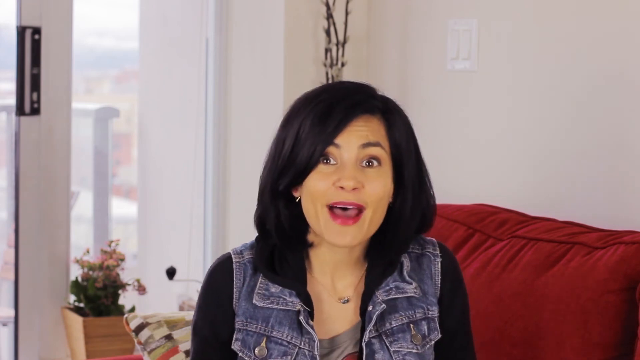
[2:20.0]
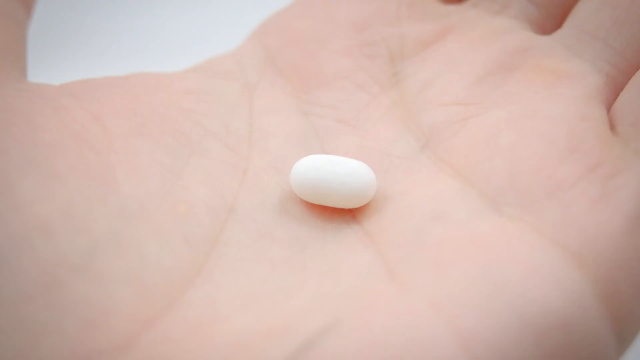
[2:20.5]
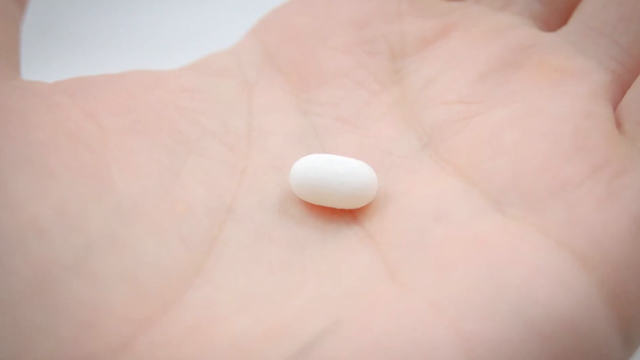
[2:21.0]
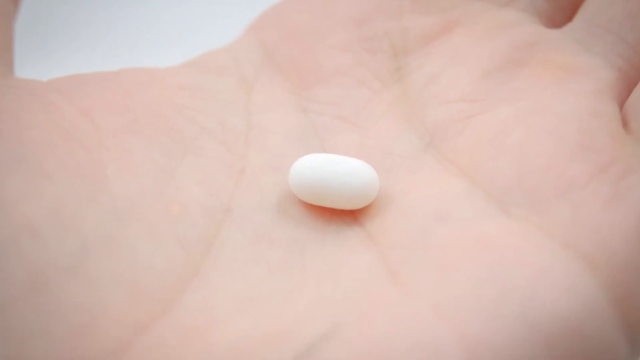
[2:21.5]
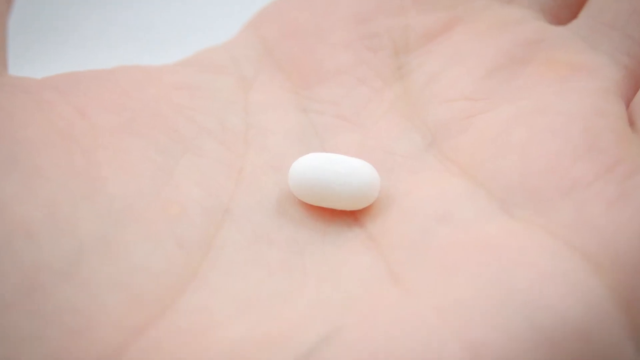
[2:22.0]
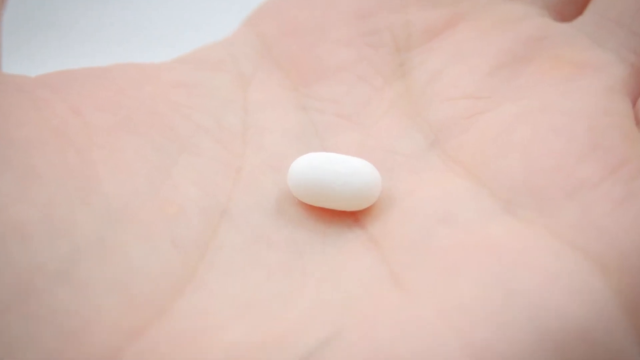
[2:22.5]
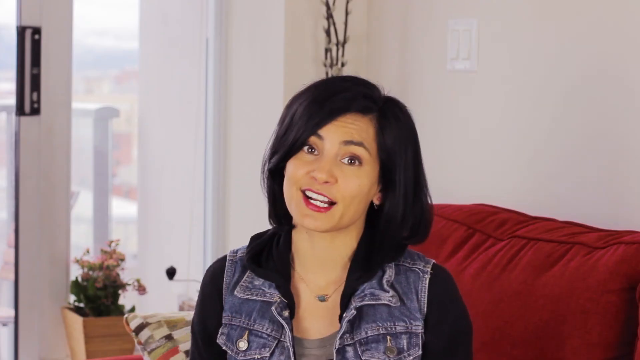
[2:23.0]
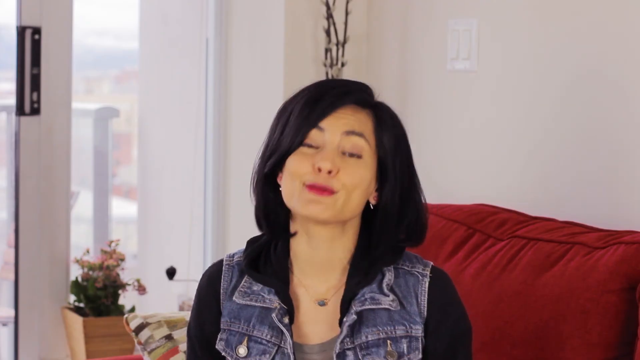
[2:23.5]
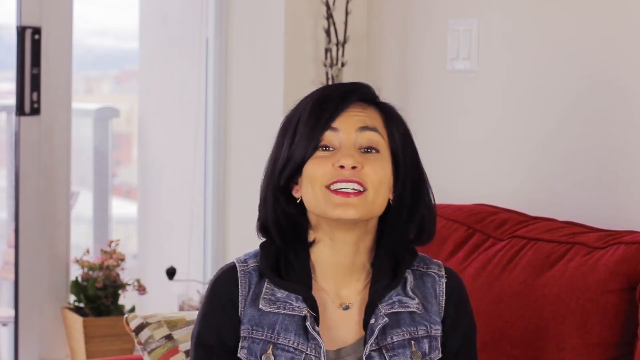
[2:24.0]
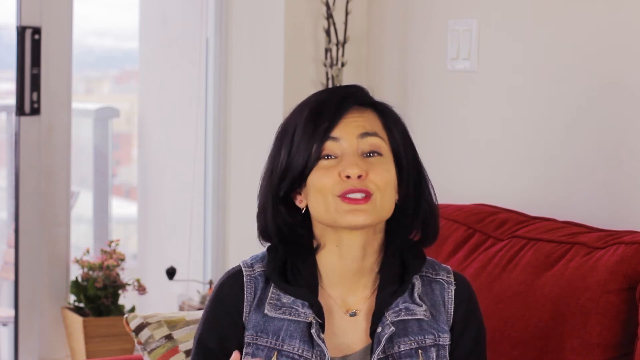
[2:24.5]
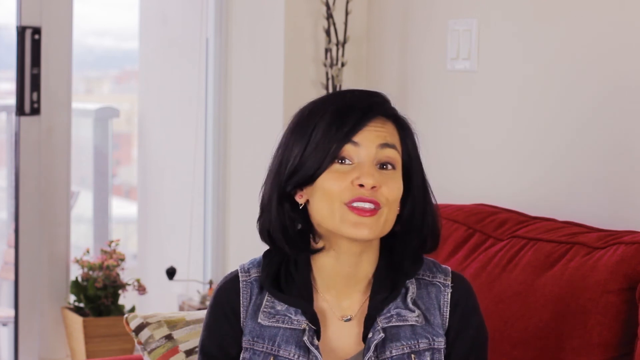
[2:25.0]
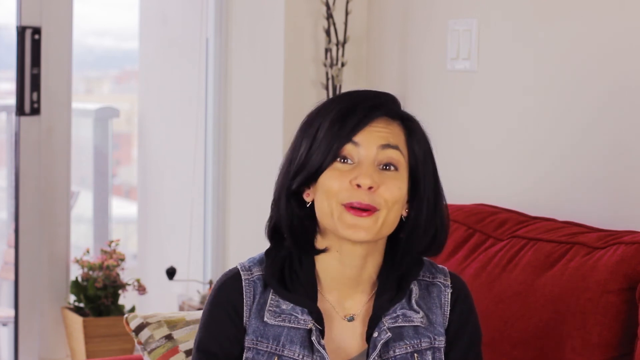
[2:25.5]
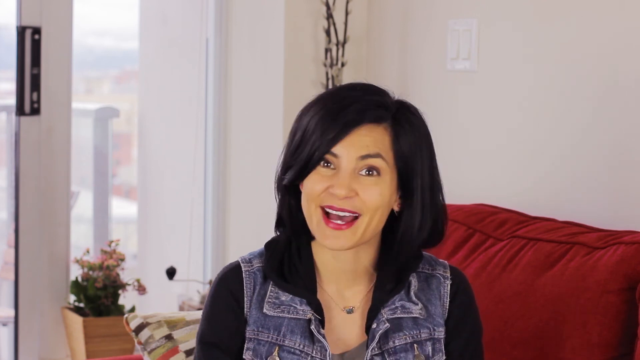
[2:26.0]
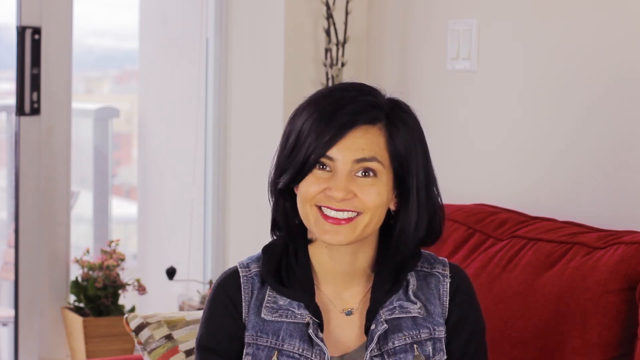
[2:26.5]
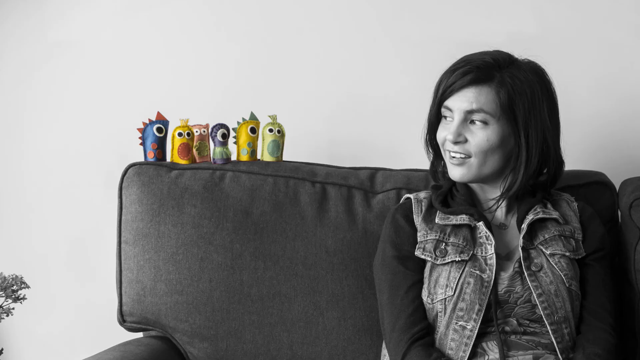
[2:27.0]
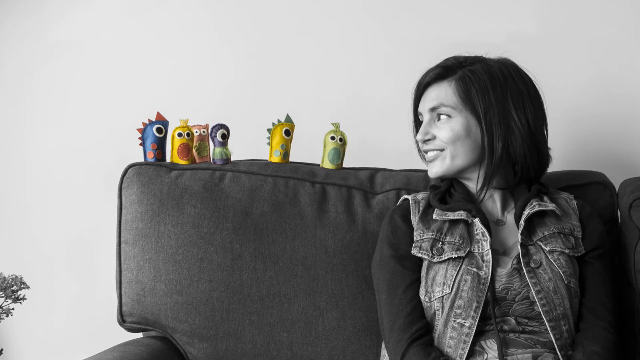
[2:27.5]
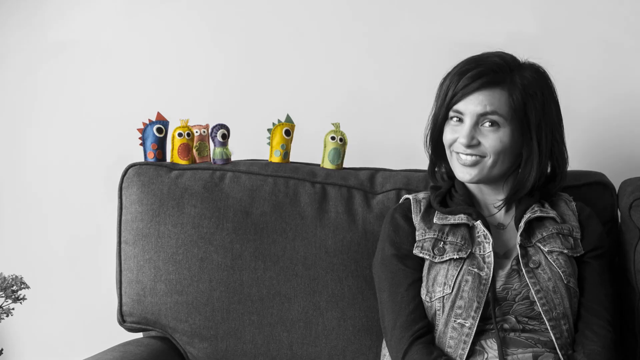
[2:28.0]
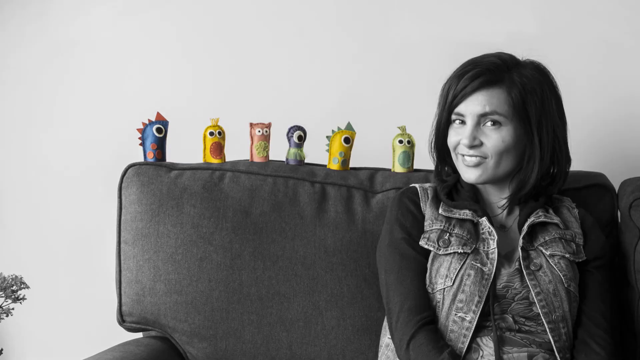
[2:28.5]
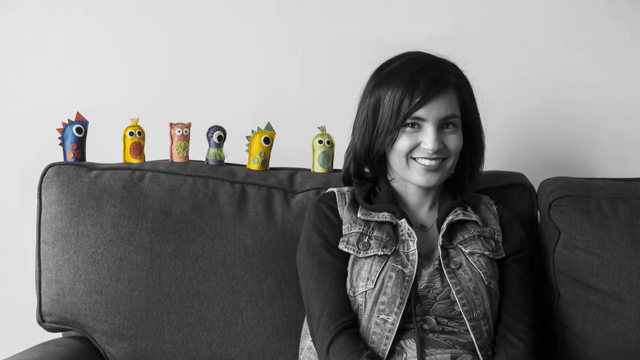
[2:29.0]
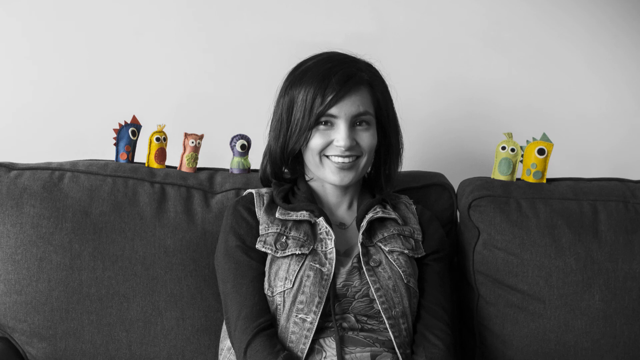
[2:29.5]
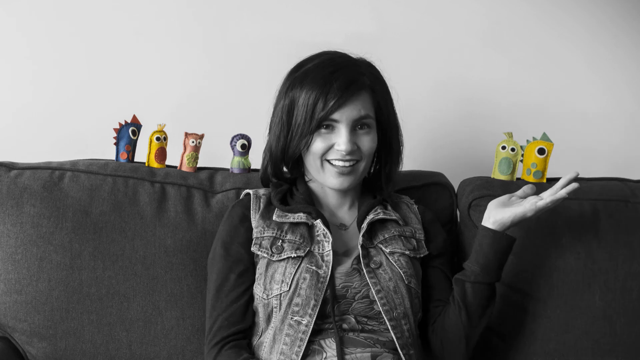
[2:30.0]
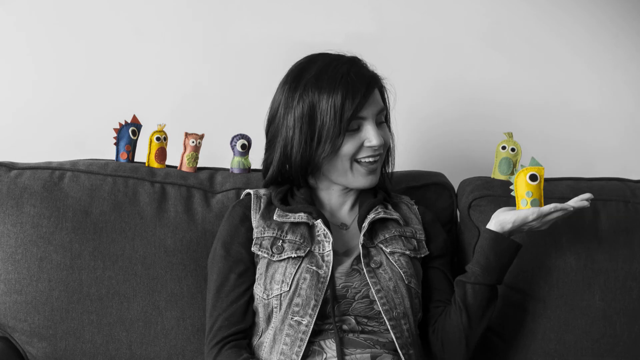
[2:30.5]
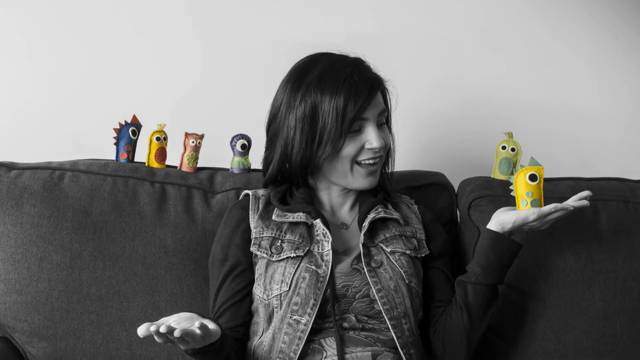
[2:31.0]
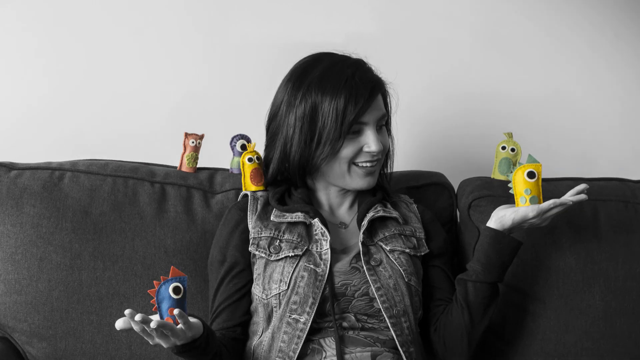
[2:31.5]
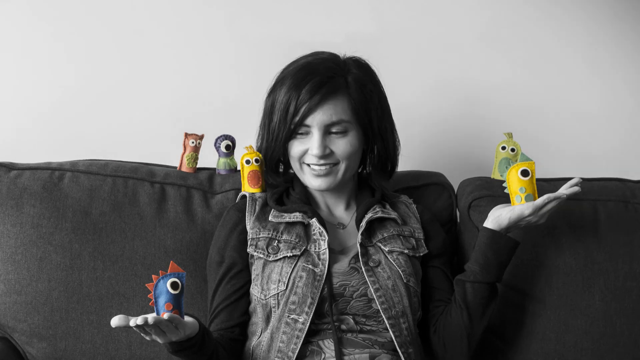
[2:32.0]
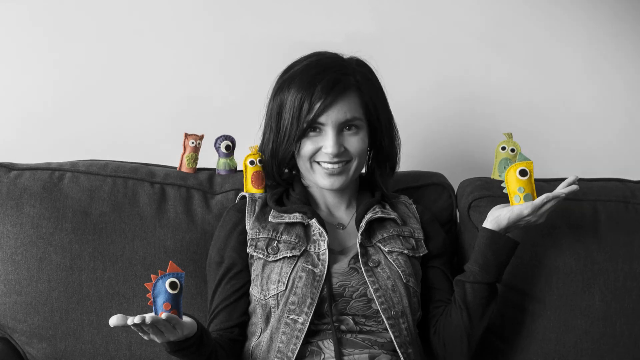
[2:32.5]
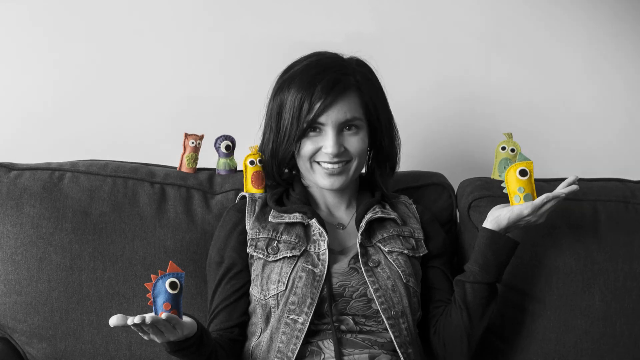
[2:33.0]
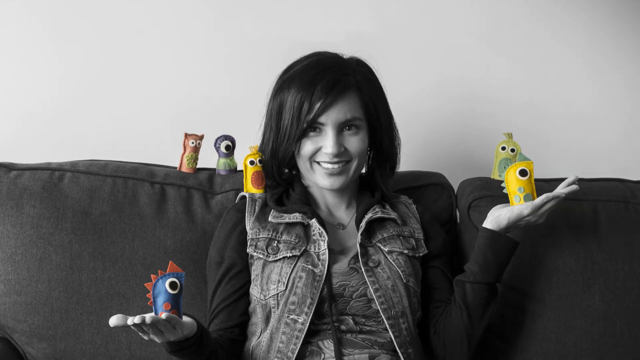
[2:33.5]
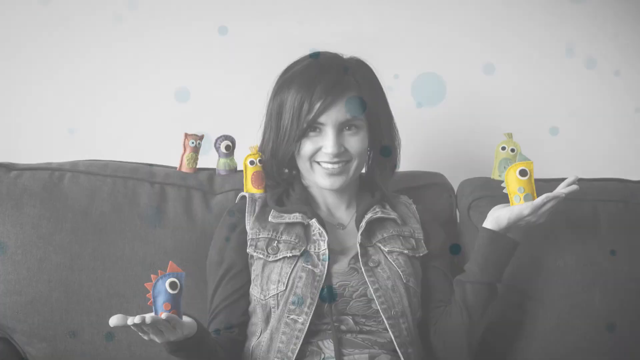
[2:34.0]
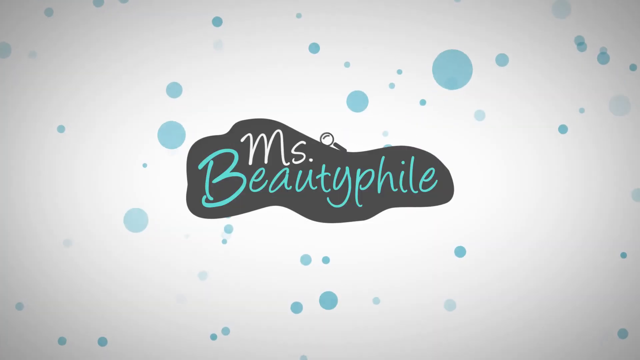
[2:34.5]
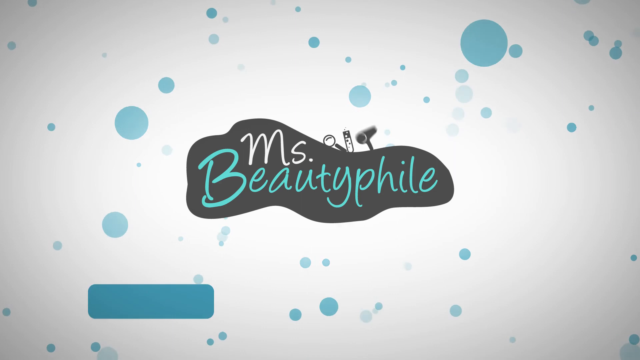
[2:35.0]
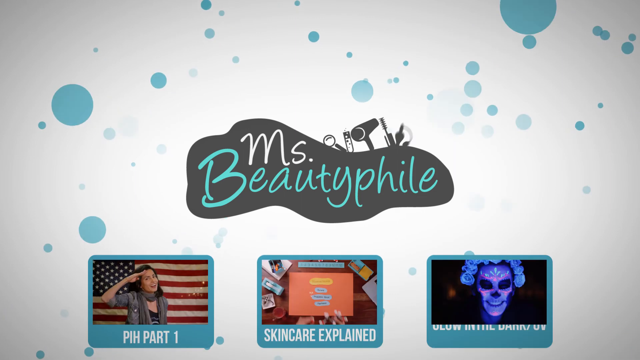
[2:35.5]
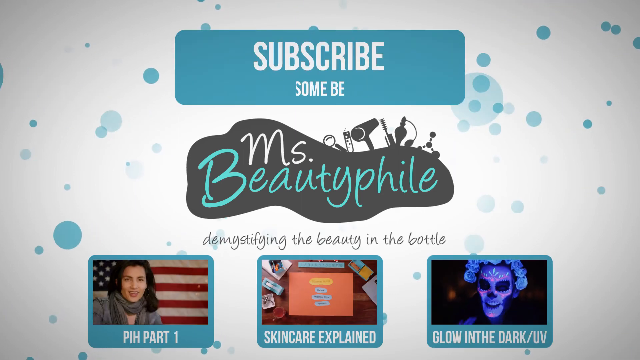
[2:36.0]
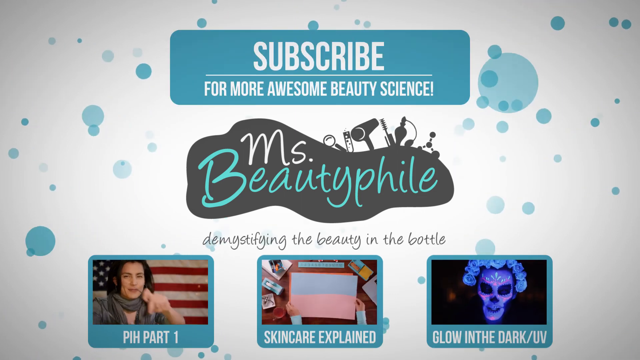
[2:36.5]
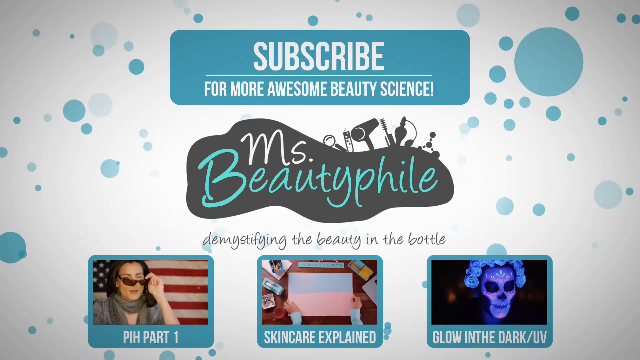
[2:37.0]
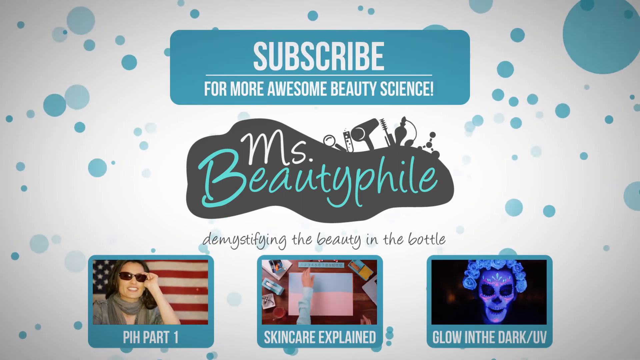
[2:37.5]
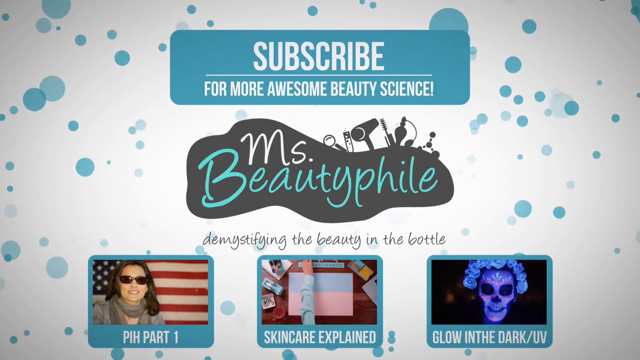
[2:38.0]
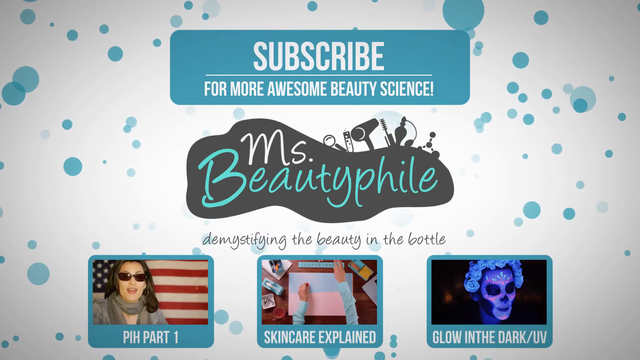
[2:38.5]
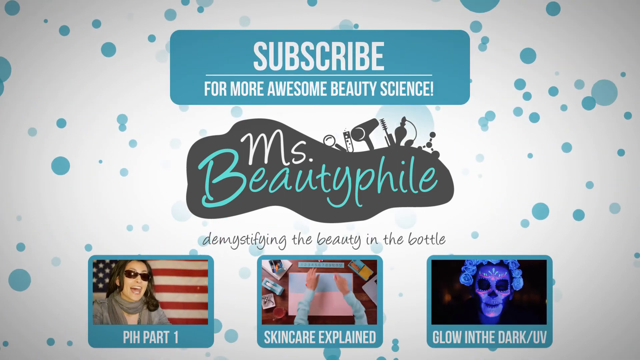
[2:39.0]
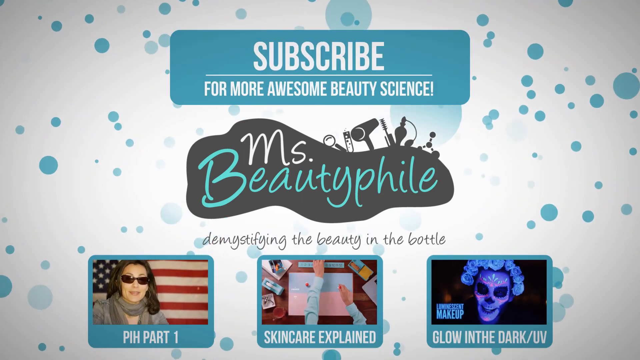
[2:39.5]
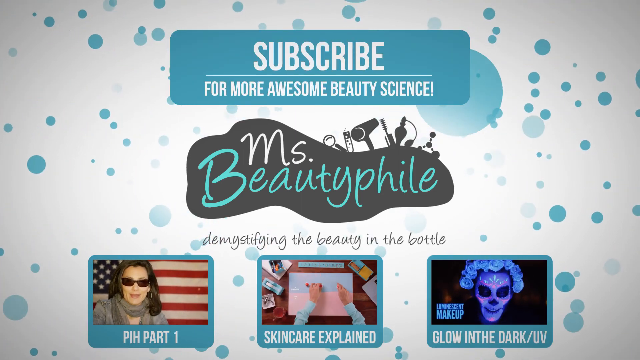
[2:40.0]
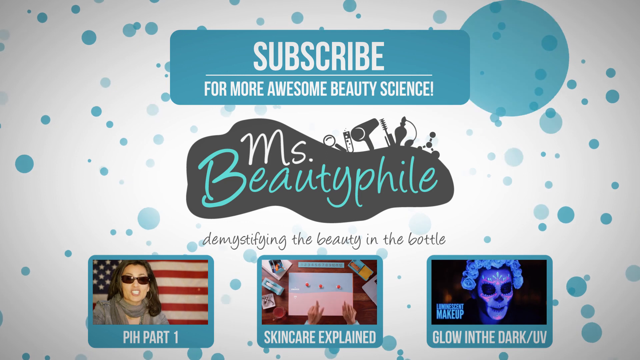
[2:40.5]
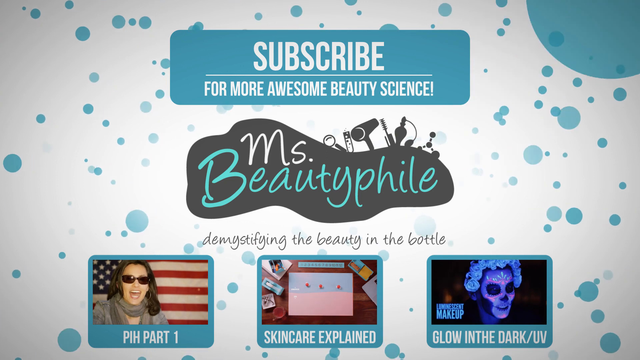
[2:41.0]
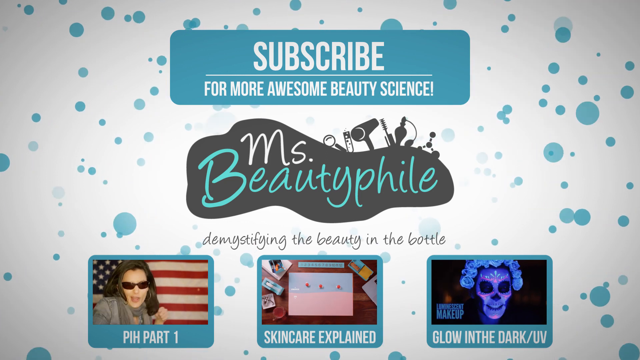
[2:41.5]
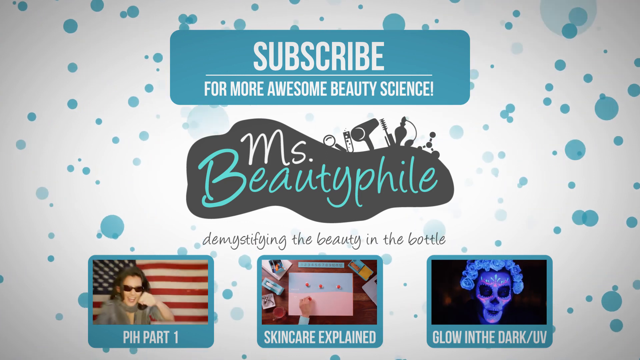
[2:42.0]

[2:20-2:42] The woman sits on the red couch. An electrical outlet is on the wall, along with the handle of what looks like a sliding door, and there is black on the left-hand side. The woman fixes her hair, turning it to the right. The video cuts to an image of a white hand on a white backdrop with a white pill; the shadow tilts to the left, with the light coming from either the top or the right. The camera slightly zooms into the pill, then returns to a shot of the woman getting her hair done, followed by black and white images. A close-up shows her seated on the couch as six toy-like figures appear on it. In the image slideshow, on the left side of her face there are two: the yellow one on her hand and the green one behind. On the other side, the blue one is on her hand and the red one on her shoulder, while the purple and pink ones are along the couch. Credits follow, with three or more pop-ups of more videos from her at the bottom, showing the channel is MsBeautyPill, and viewers are asked to subscribe for more awesome beauty science.